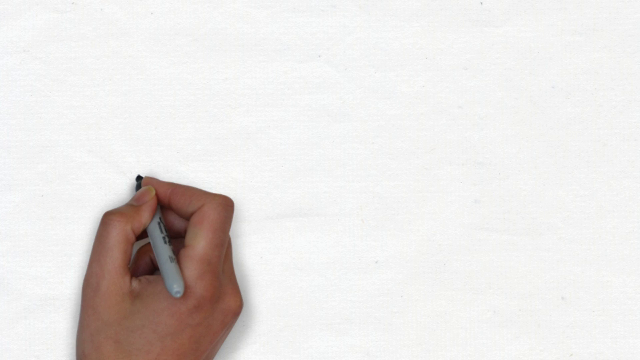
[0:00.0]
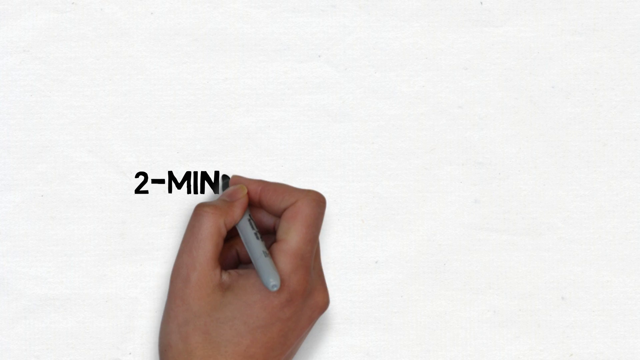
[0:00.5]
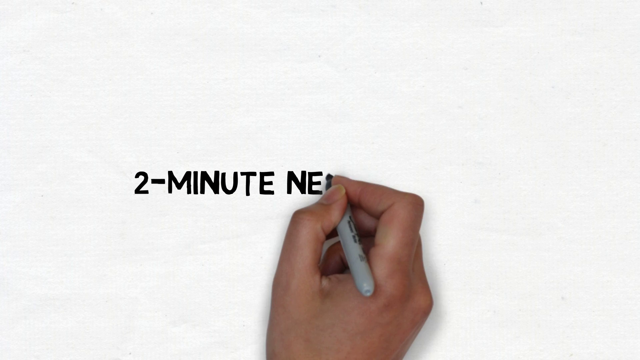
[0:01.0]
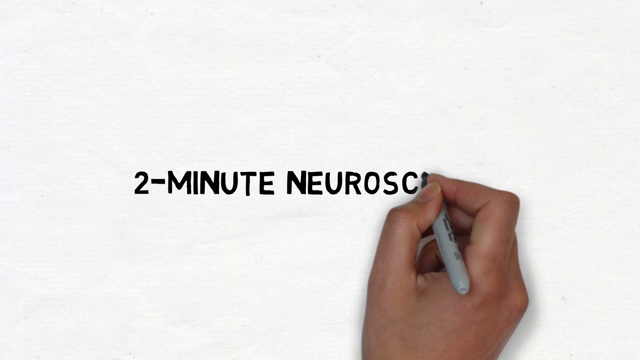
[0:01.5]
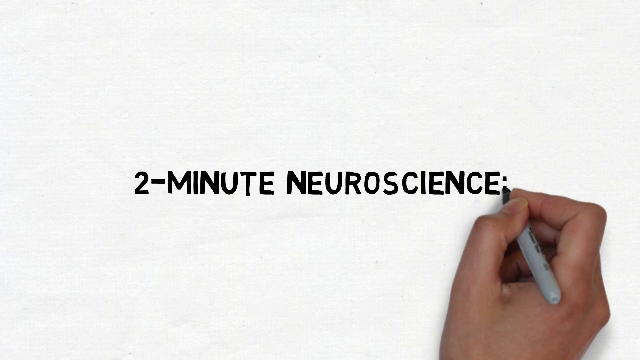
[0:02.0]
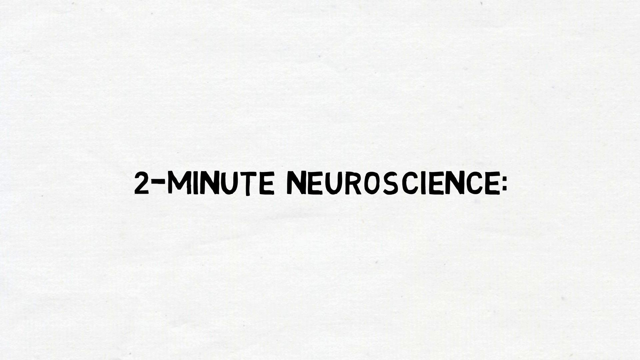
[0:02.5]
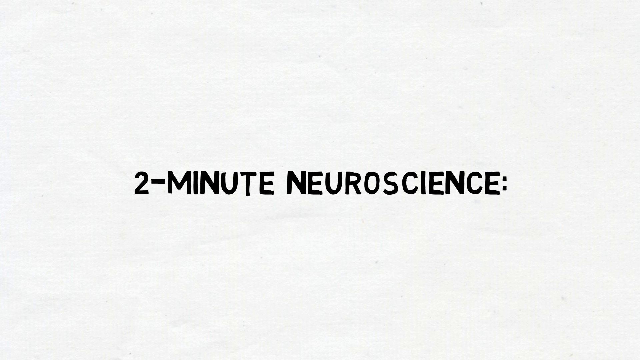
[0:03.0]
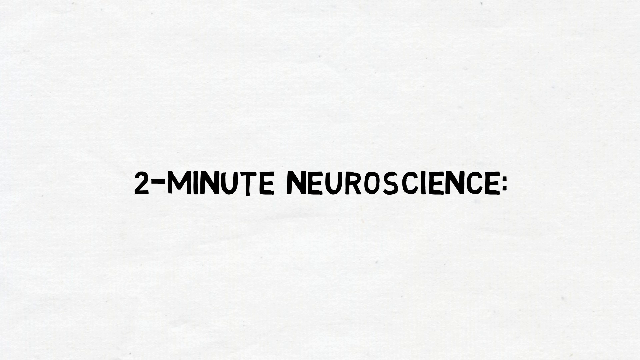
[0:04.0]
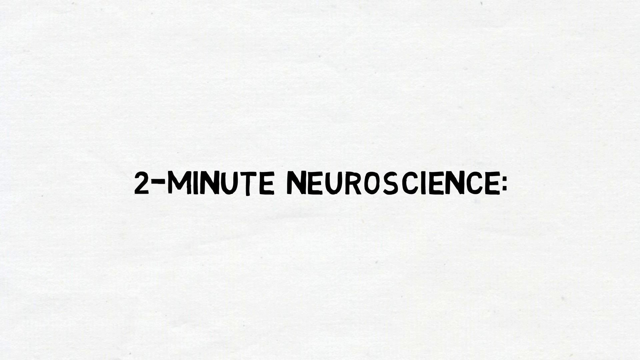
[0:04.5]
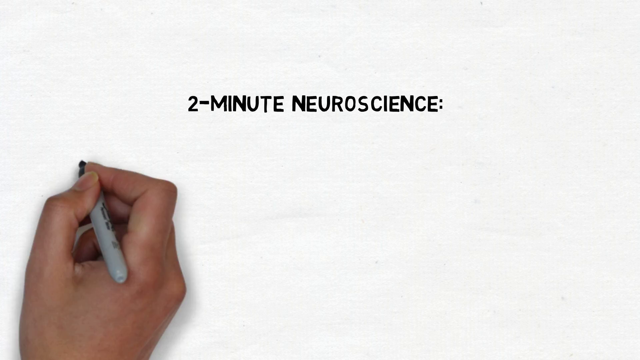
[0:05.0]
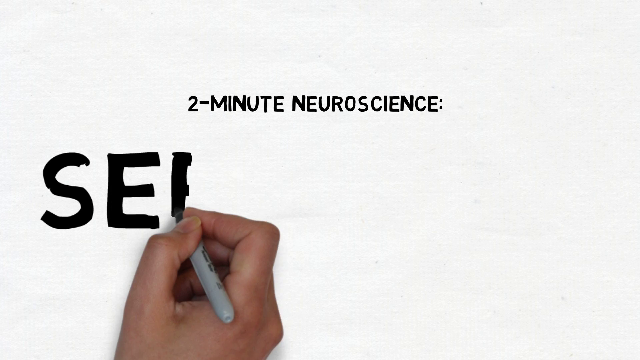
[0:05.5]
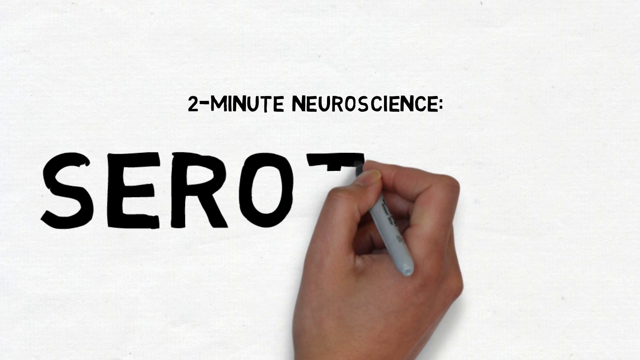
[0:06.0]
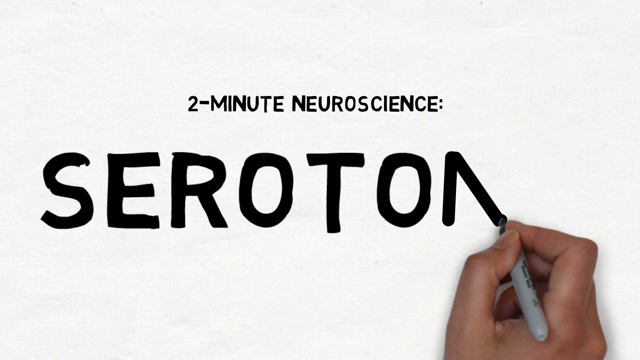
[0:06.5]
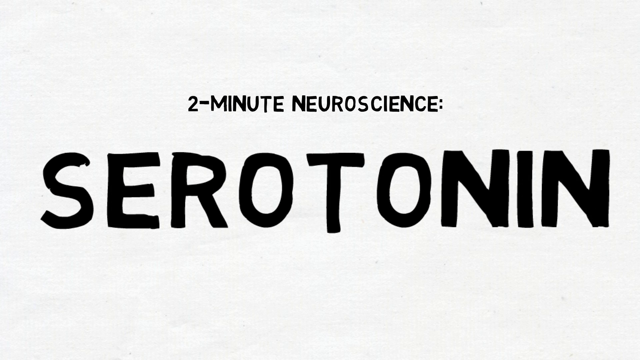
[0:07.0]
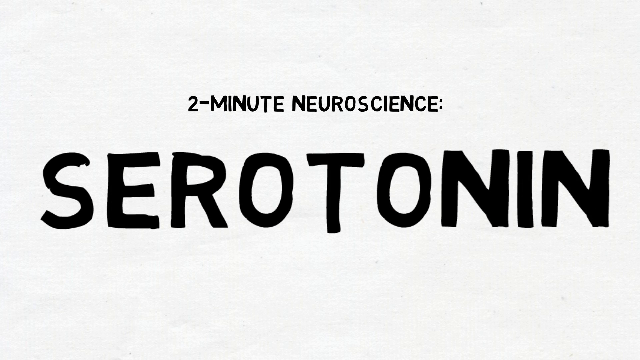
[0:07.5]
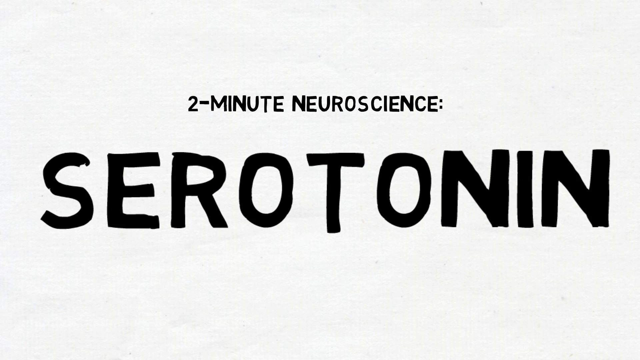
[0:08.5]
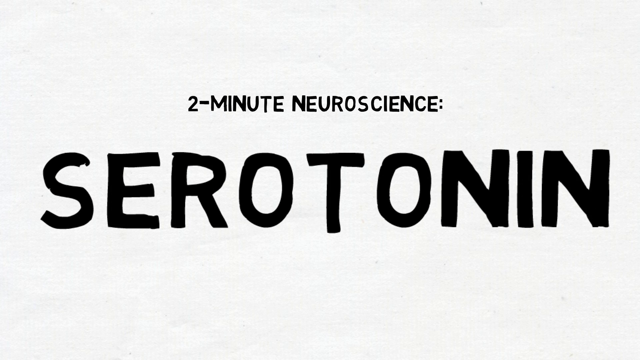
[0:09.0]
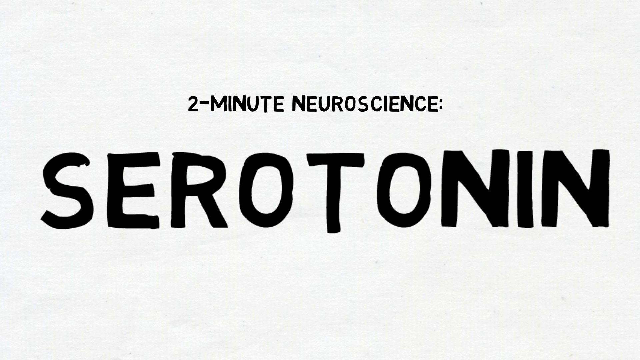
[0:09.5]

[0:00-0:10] On a white screen, a hand holds a gray marker with a black tip that has "sharpie" on it. The hand writes "two-minute neuroscience" on the white screen. That lettering moves upwards to the top of the screen and gets smaller, and the hand then writes the word "serotonin" in the middle in big, bold, dark black letters, much larger than the lettering above it. All of the writing then goes away and the screen turns white again.